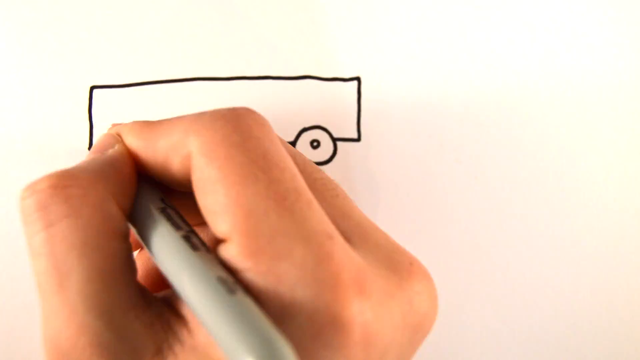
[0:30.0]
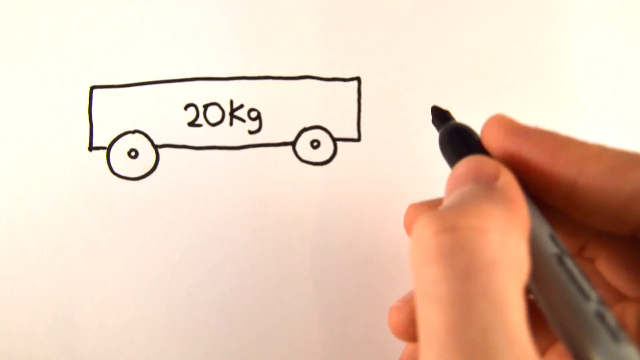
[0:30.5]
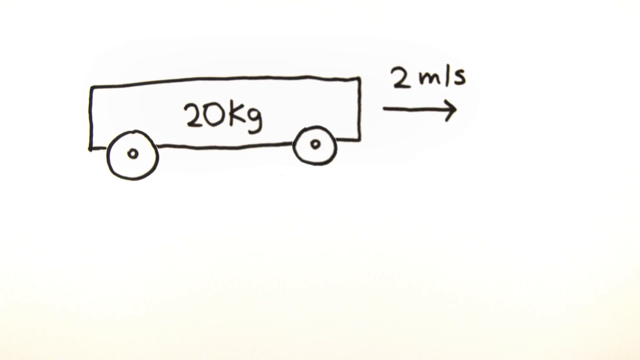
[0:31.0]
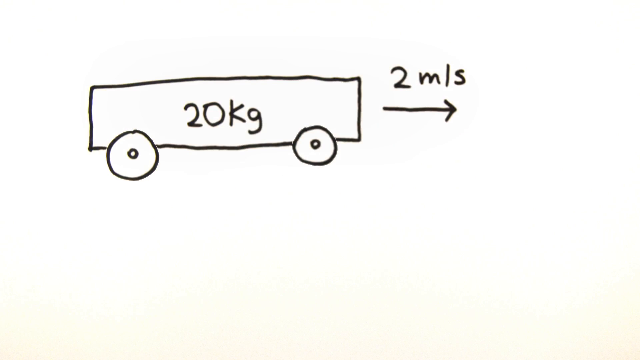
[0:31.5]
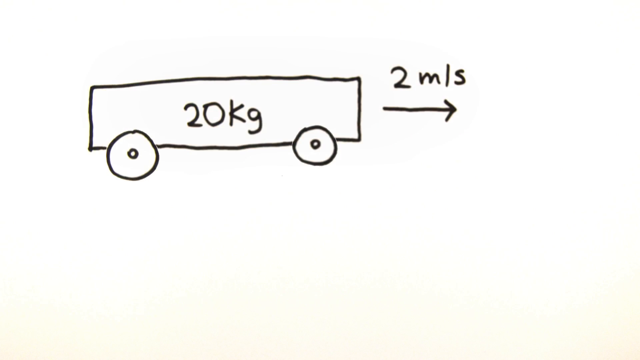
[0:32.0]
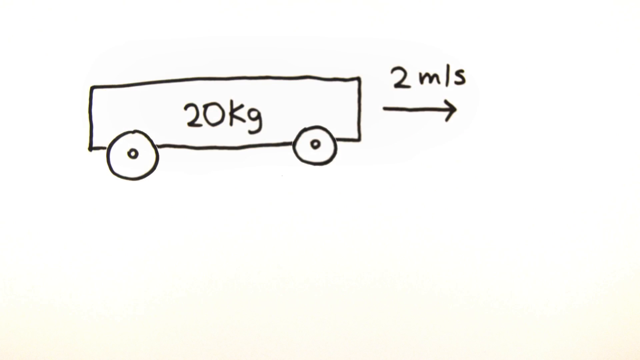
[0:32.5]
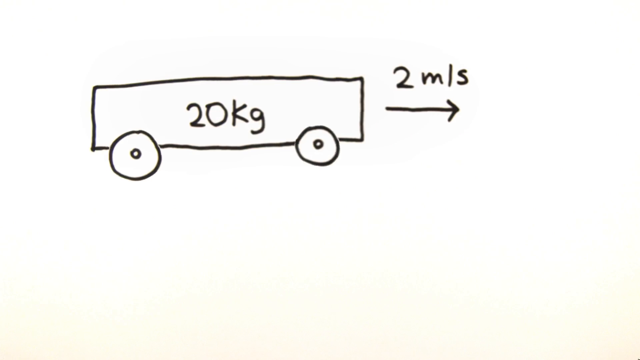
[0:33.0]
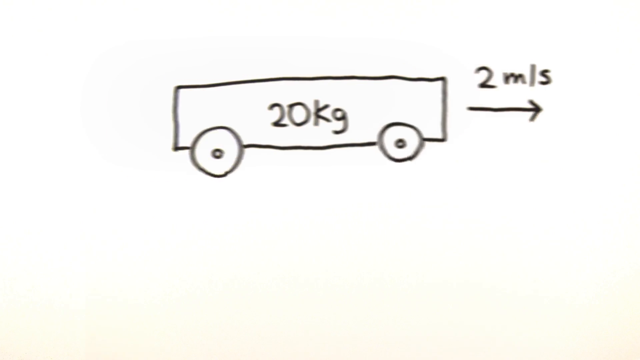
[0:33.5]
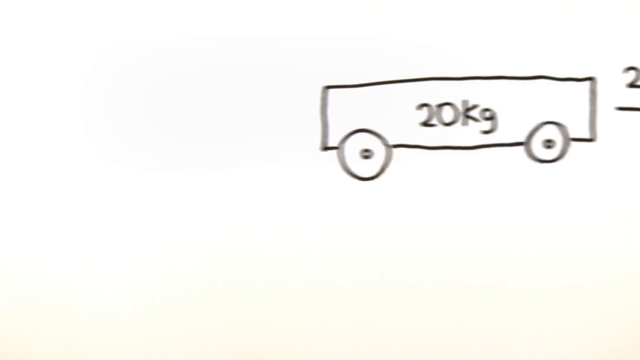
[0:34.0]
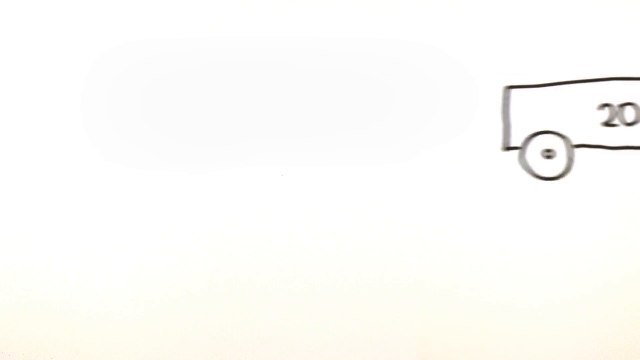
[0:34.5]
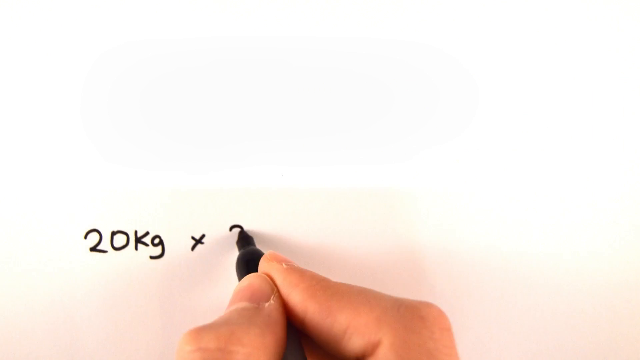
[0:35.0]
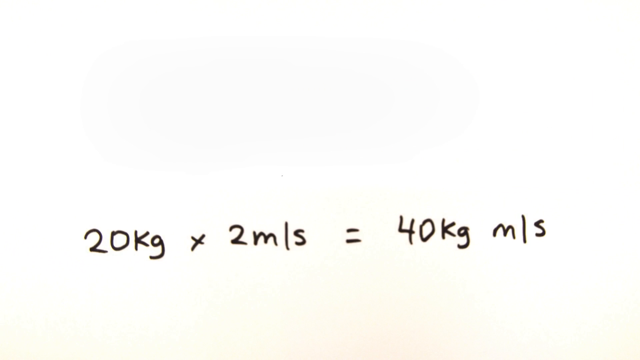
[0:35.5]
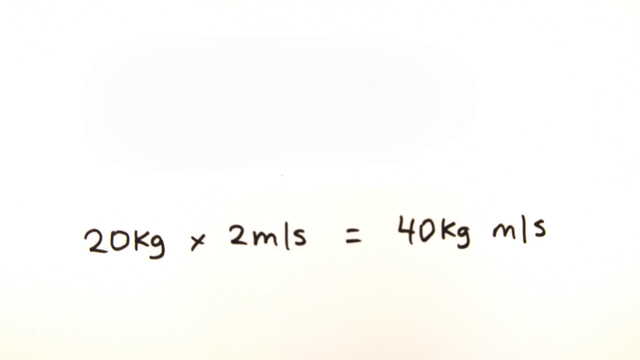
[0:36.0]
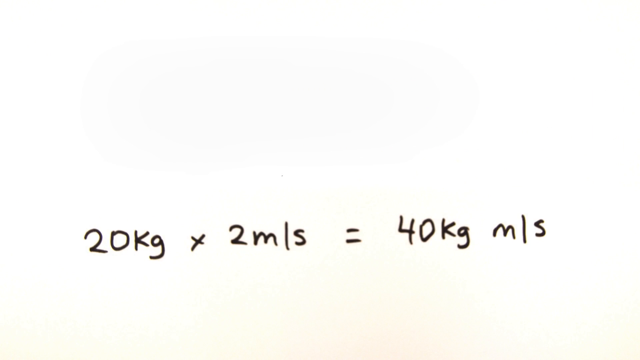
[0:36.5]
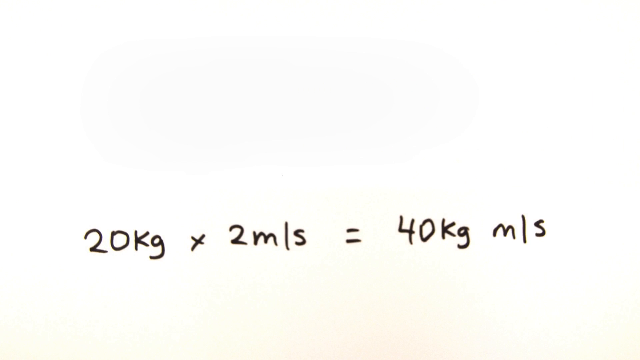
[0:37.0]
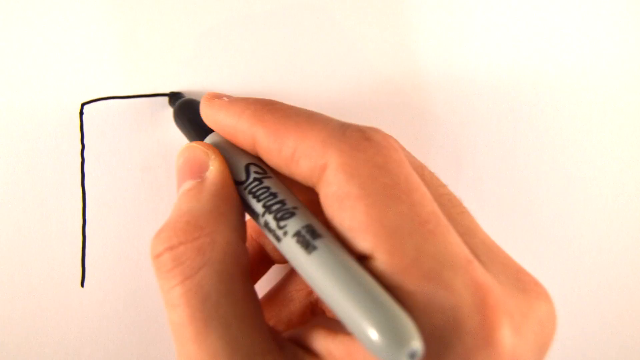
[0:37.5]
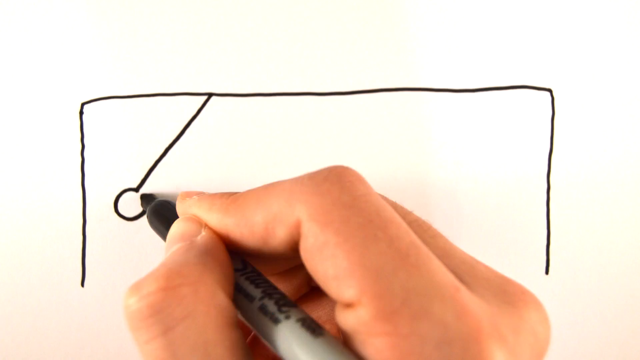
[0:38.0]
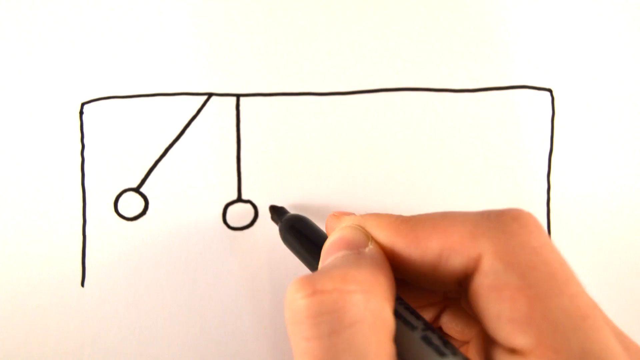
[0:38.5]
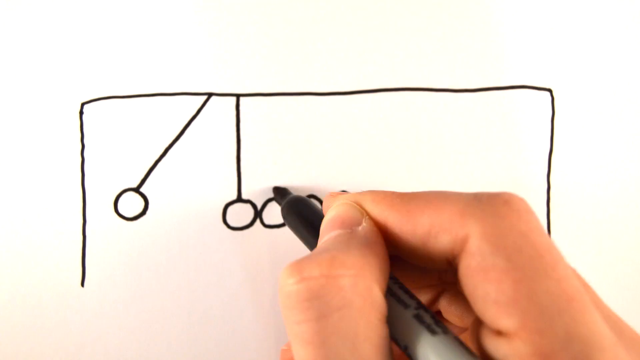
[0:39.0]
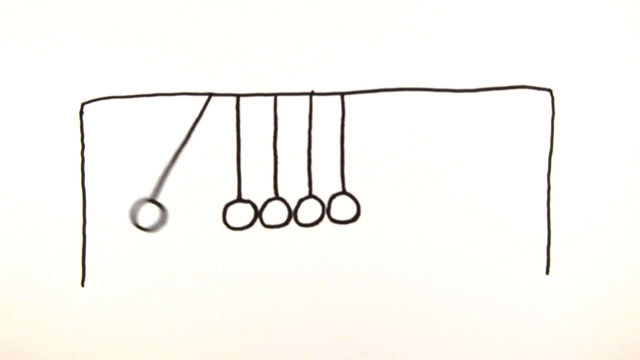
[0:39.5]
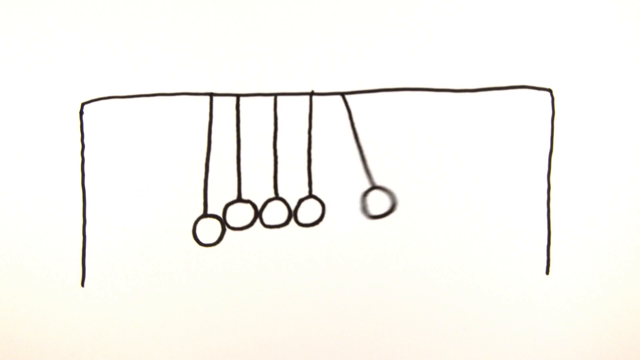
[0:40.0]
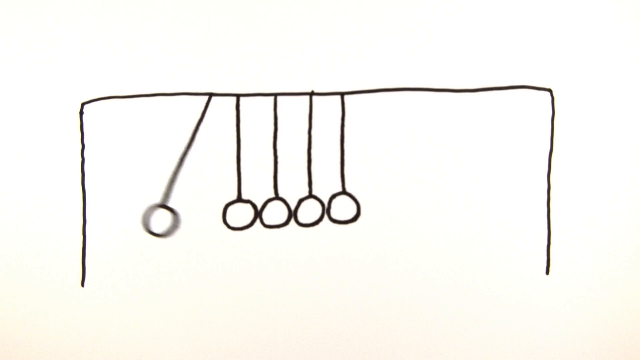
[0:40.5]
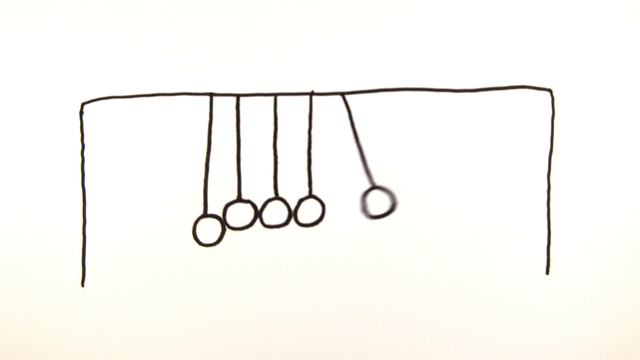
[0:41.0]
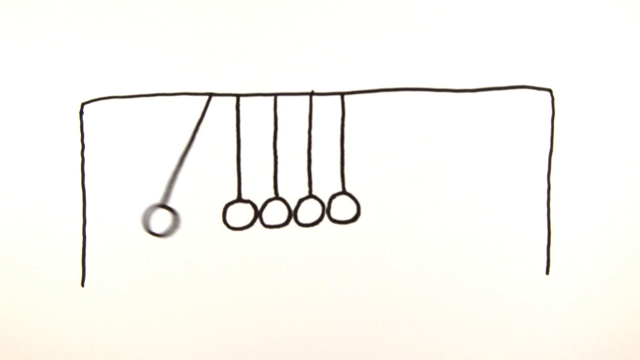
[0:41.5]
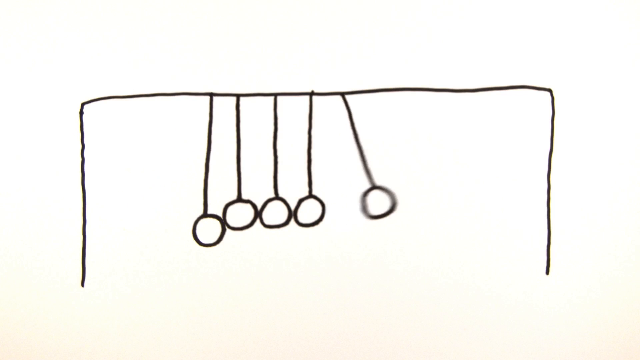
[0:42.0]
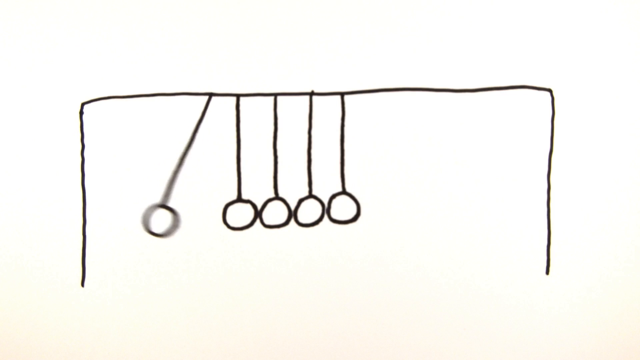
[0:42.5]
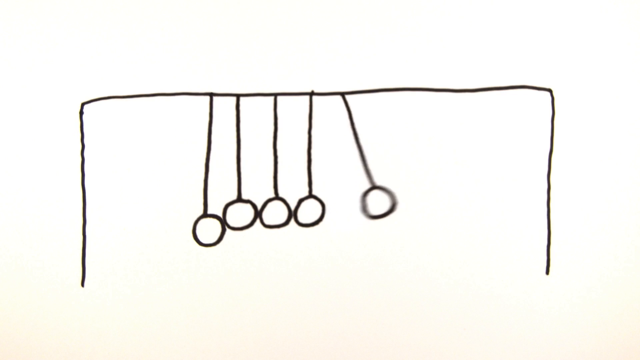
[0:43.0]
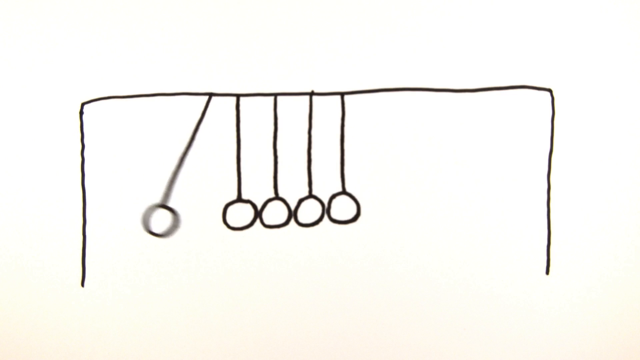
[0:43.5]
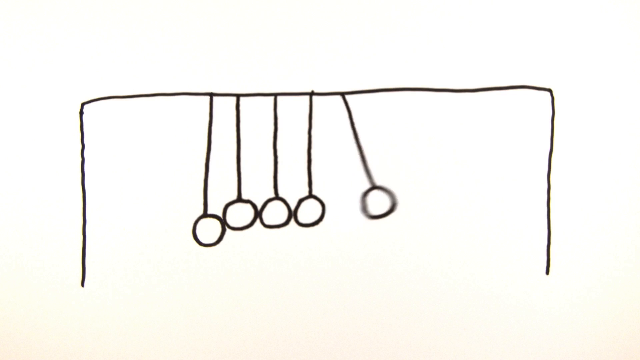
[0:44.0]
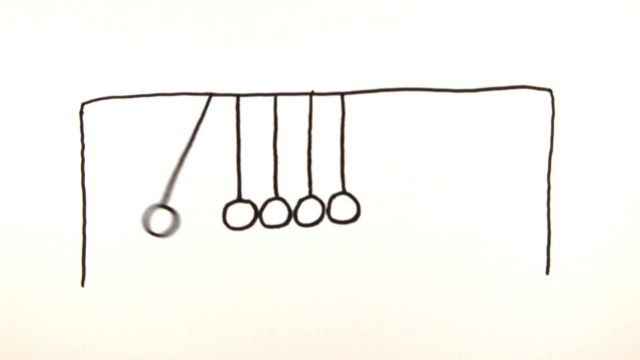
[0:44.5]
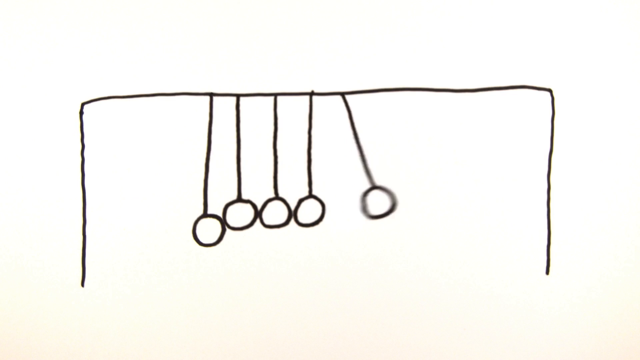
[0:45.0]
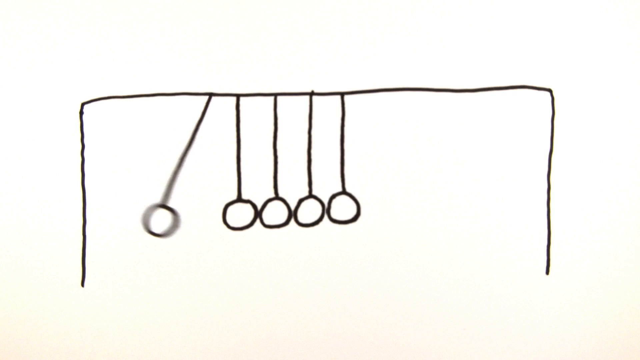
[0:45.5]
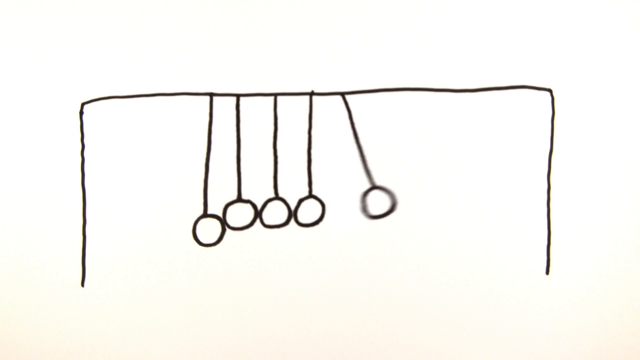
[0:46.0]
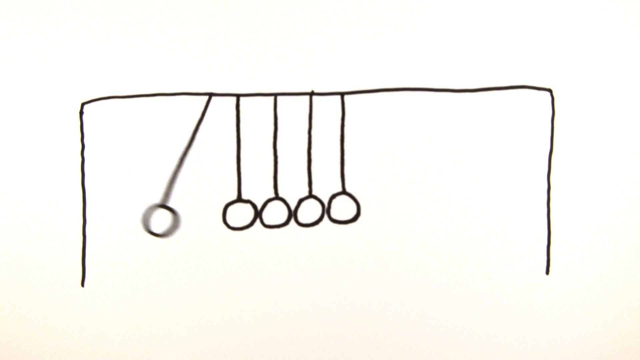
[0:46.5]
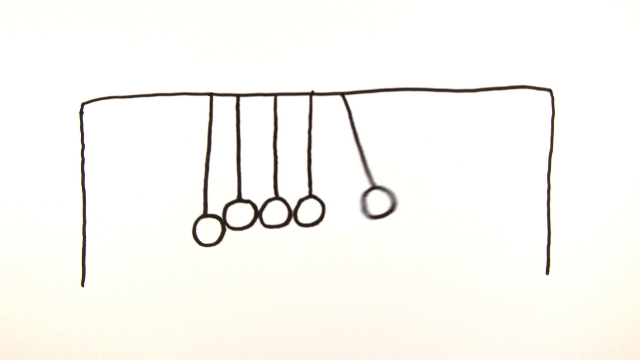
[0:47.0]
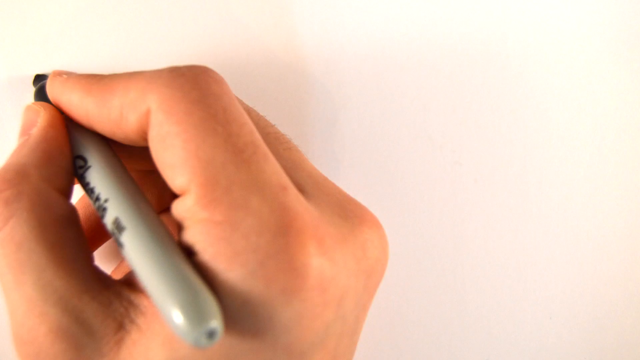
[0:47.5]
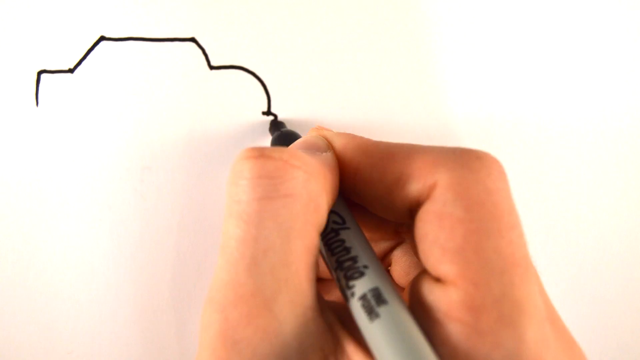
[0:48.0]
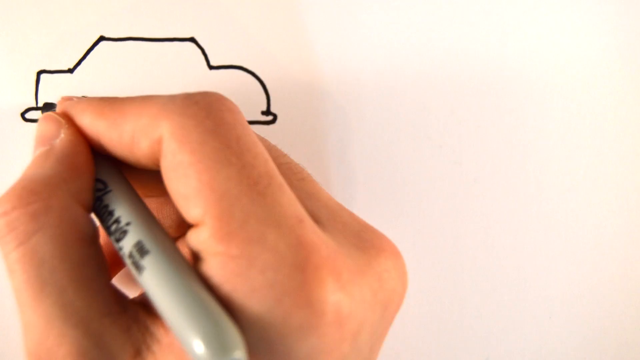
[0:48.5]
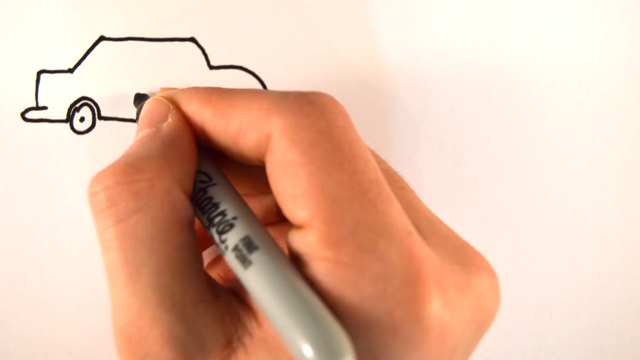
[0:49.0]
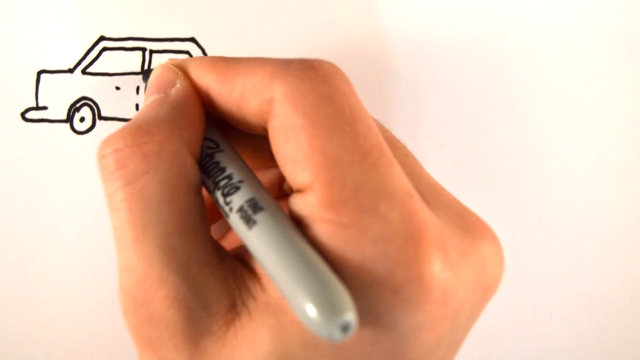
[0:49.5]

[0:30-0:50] The person still holds the Sharpie with the thumb on the left side and the pointer and middle fingers on the right side. The drawing looks like a truck with wheels, apparently seen in side profile, labeled "20 kg", possibly meaning 20 kilograms. A black arrow points on the right side, with what may be "2 m/s" above it, though the unit is unclear. The drawing moves over toward the right, and an equation comes up reading roughly "20 kg × 2 m/s = 40 kg m/s", with the unit again unclear. The person then draws a device with balls, where one ball can be moved to hit the others and they slide back and forth. Next, the person draws a car on the left side.